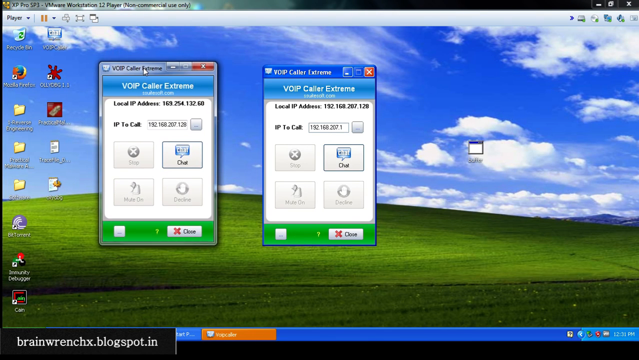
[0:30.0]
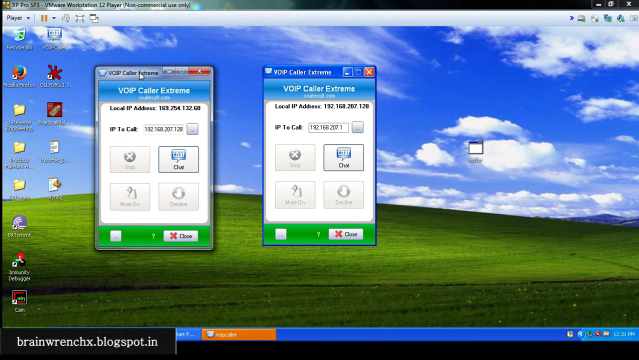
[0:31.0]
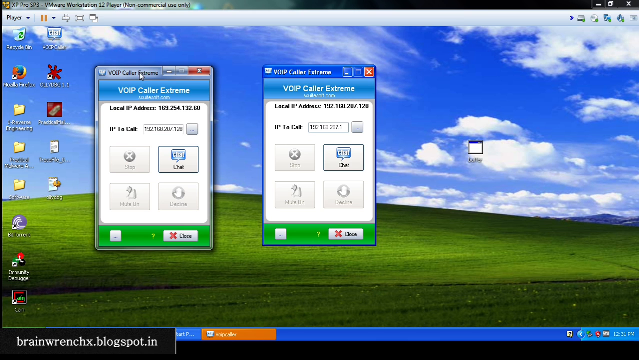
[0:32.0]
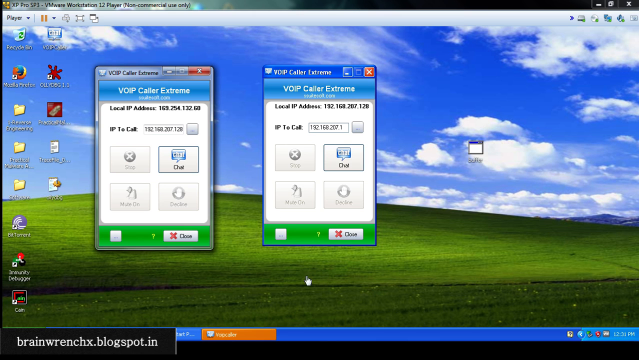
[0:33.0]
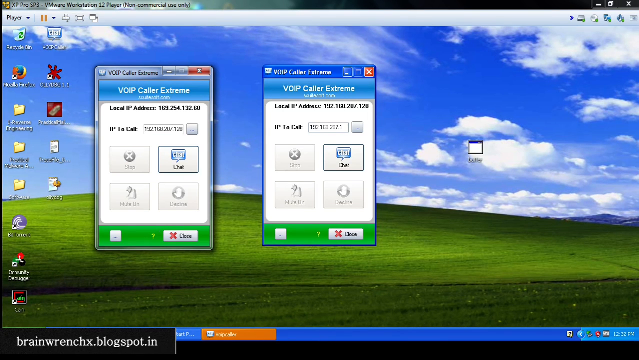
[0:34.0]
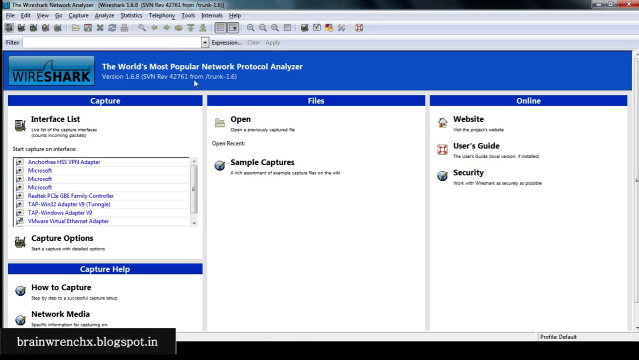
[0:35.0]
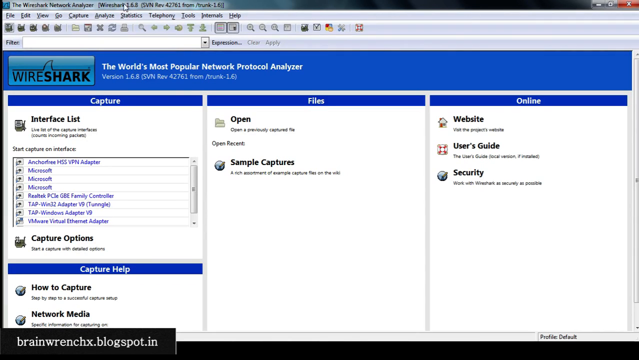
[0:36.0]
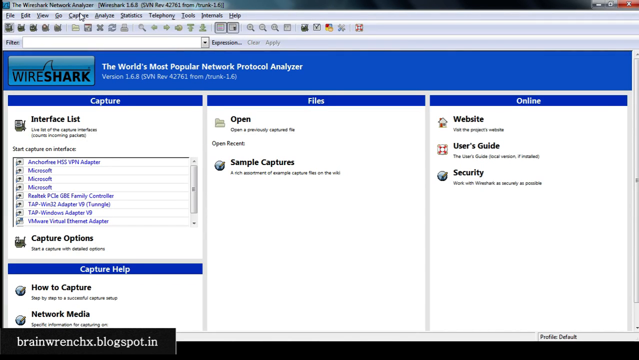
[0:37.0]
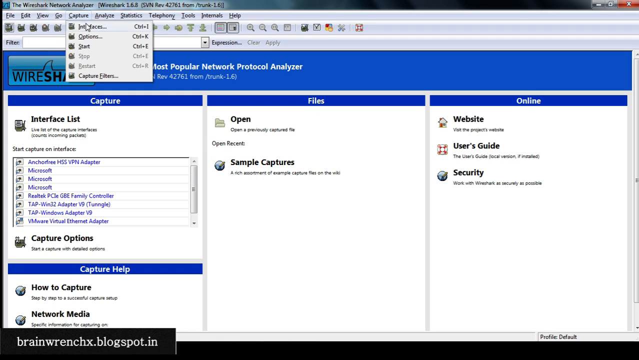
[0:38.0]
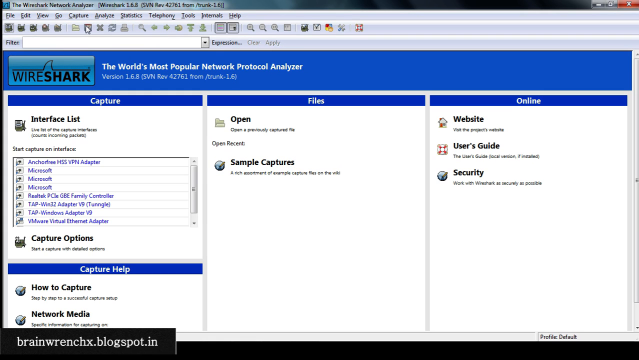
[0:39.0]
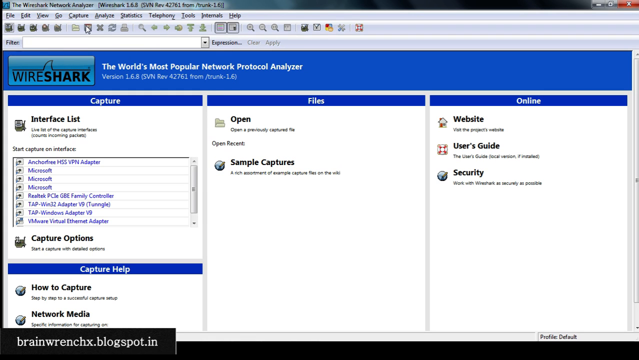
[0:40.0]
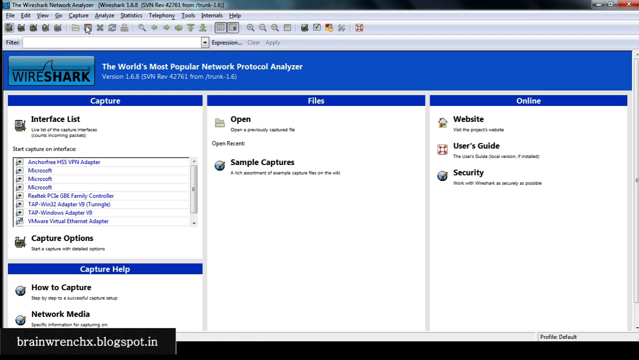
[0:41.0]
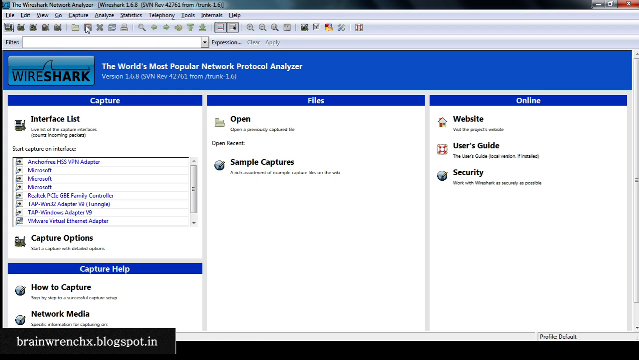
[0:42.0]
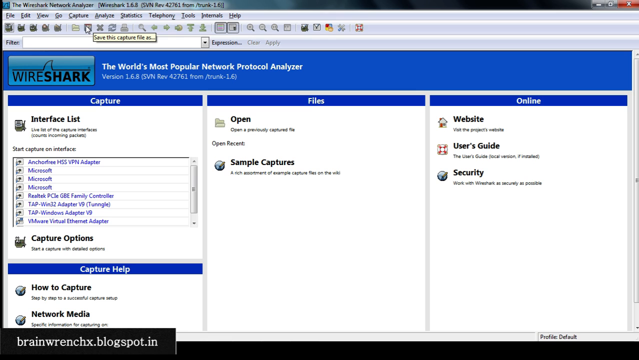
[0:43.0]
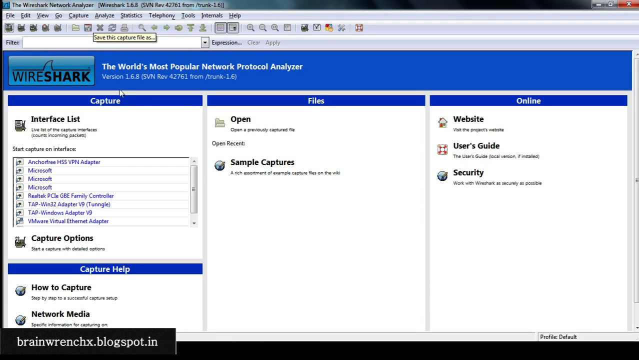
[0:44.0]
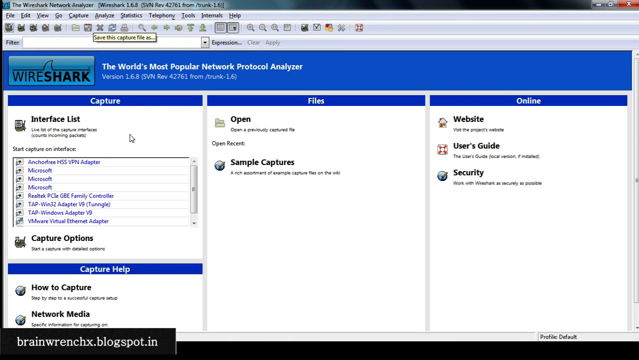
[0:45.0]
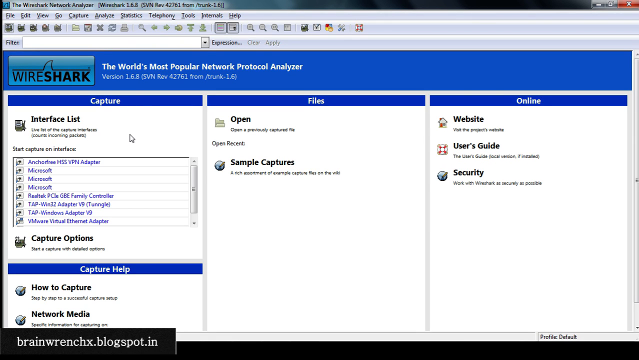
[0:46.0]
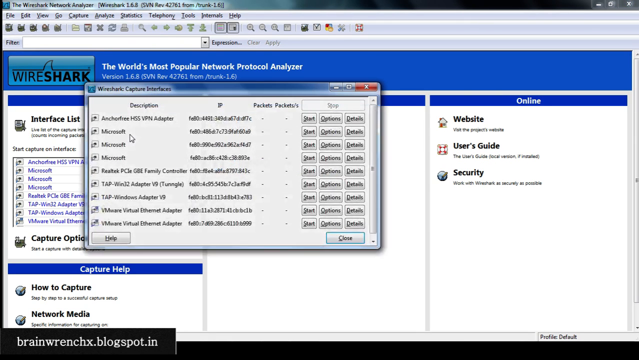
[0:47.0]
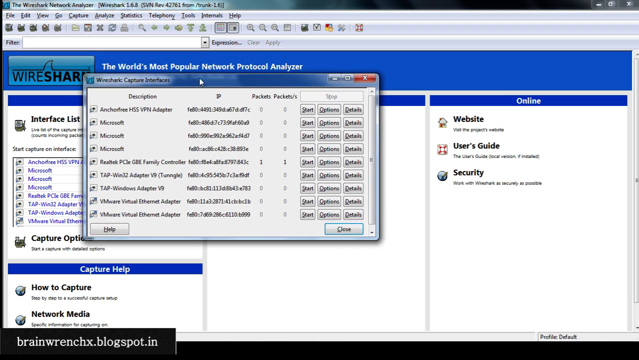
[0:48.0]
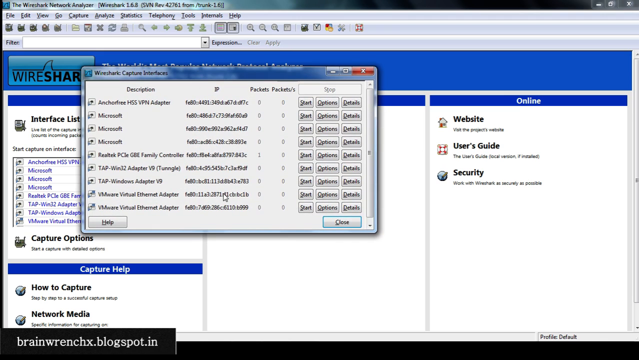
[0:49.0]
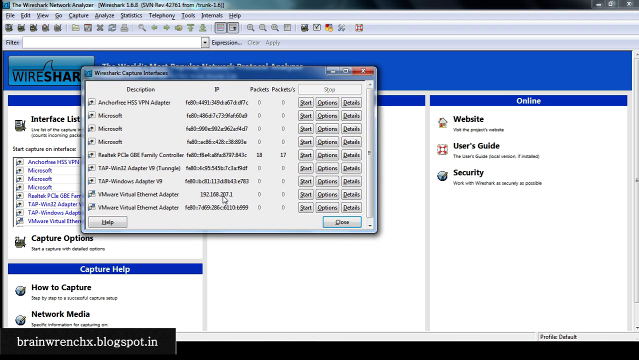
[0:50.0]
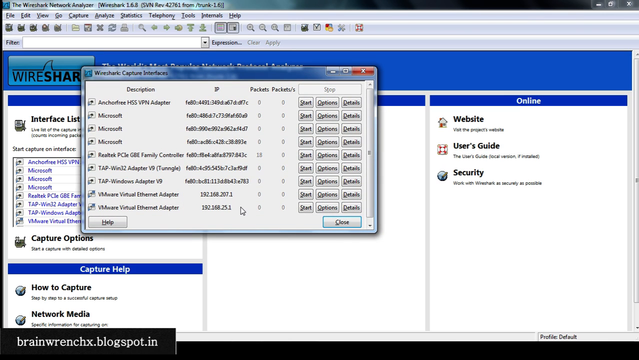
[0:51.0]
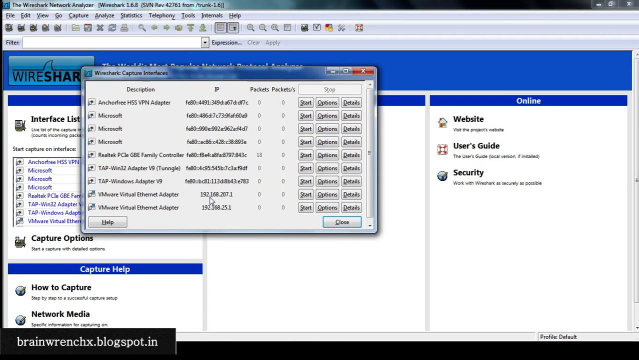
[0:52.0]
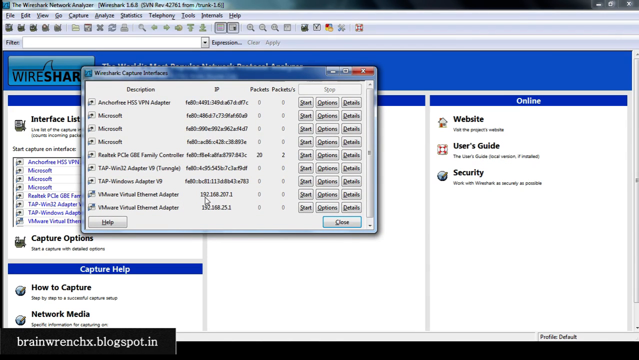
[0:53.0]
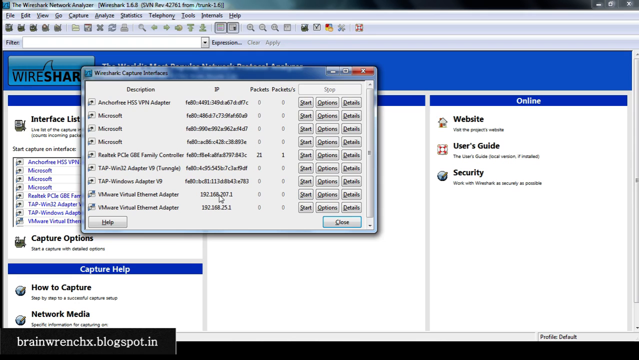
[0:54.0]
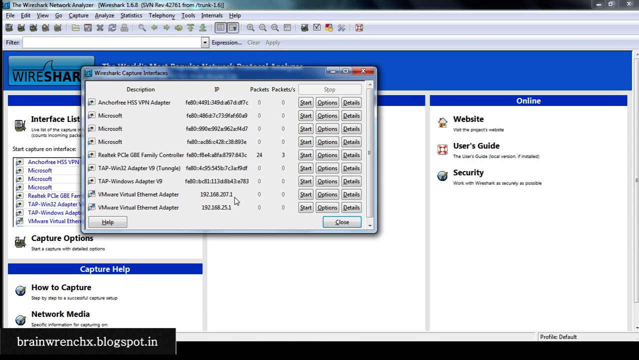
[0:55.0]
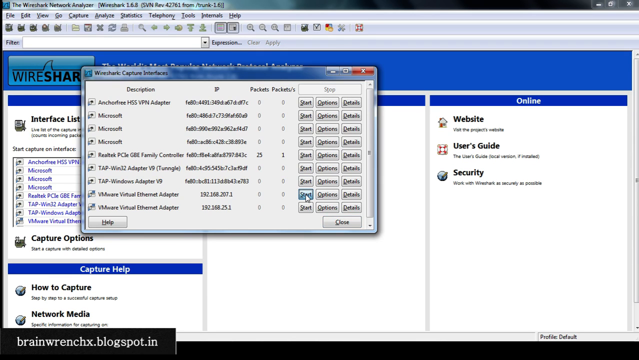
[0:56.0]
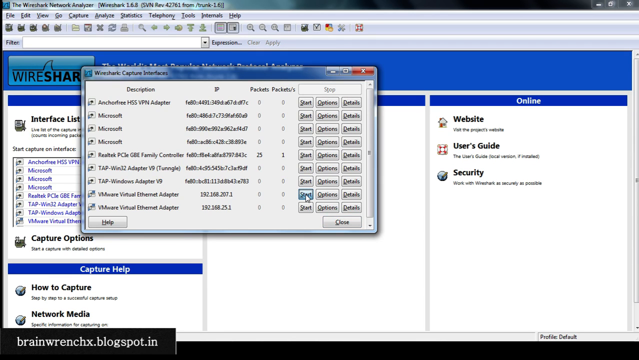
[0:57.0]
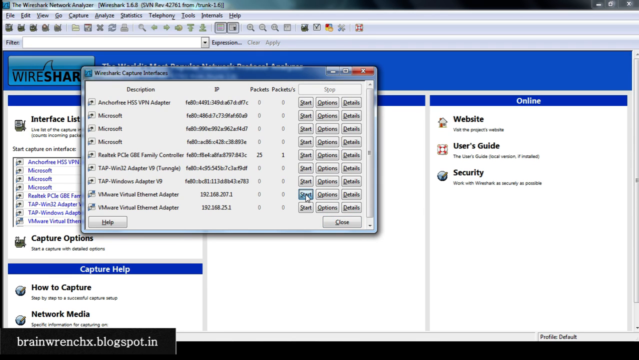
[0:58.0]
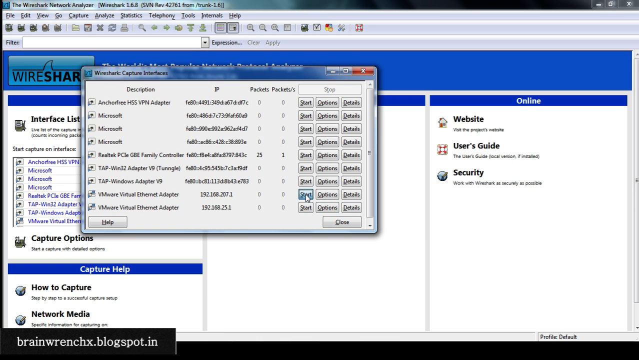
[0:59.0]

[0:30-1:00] The video moves on to another application, which might be a VPN meant to be used together with VoIP Caller Extreme. The video appears to be in English, and the desktop is probably Windows 7 or Windows 8. The video comes from a website called brainwrenchx.blogspot.in.